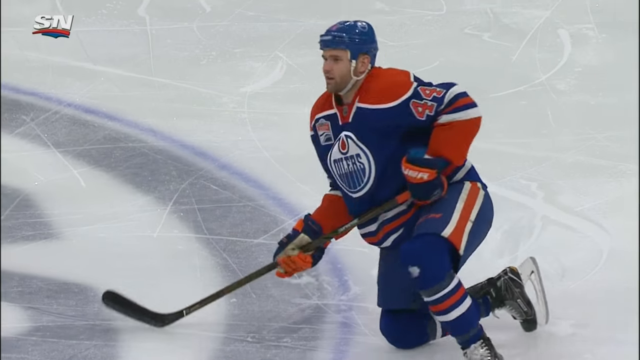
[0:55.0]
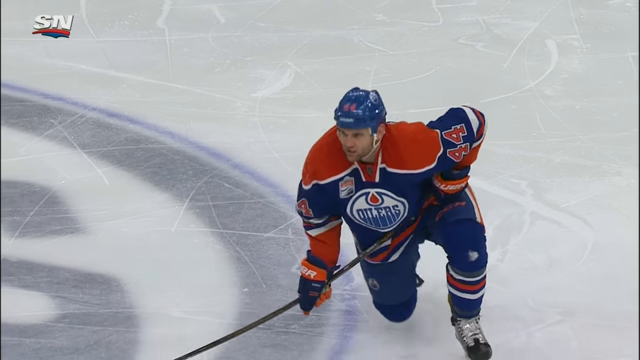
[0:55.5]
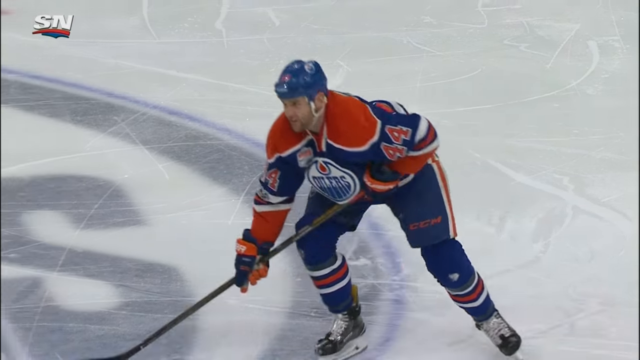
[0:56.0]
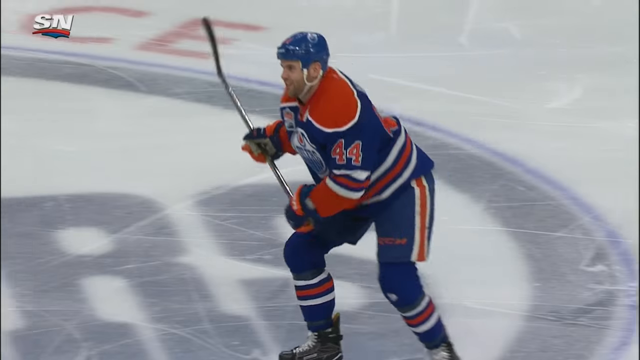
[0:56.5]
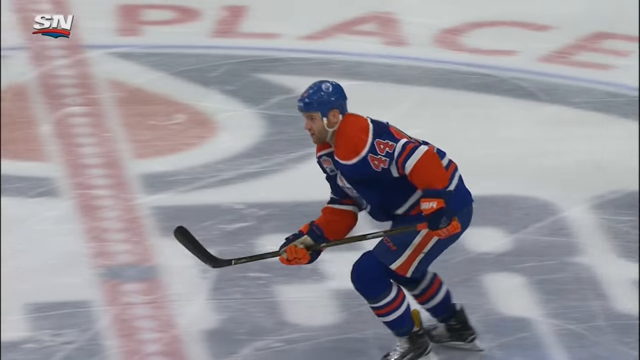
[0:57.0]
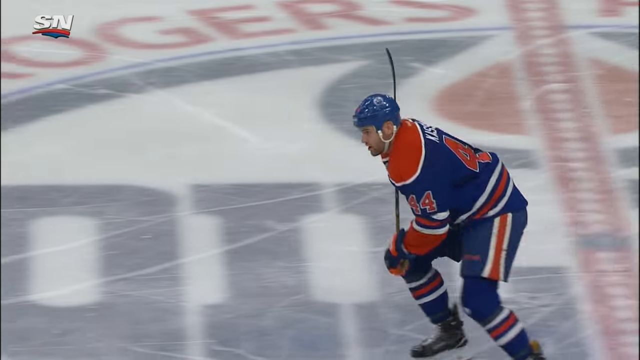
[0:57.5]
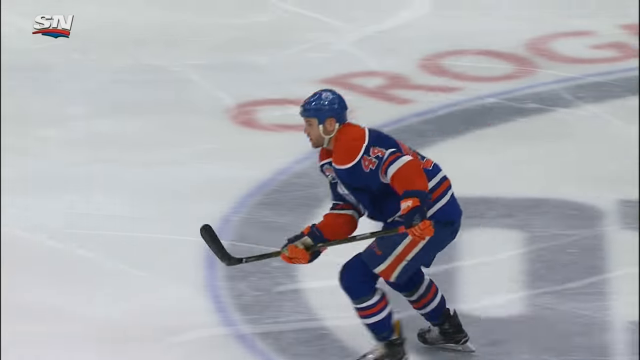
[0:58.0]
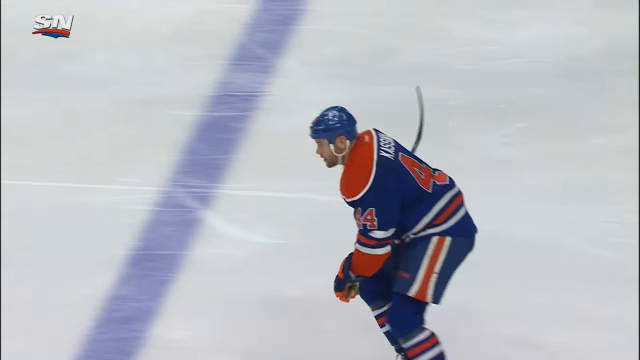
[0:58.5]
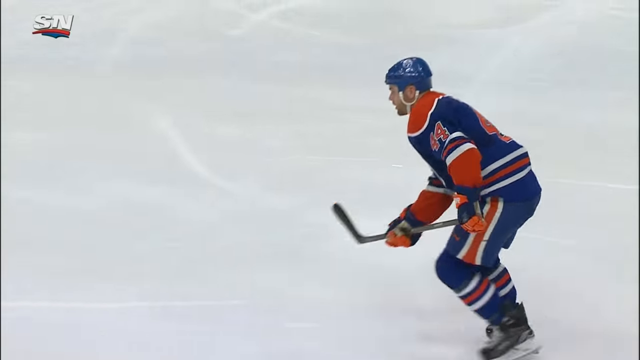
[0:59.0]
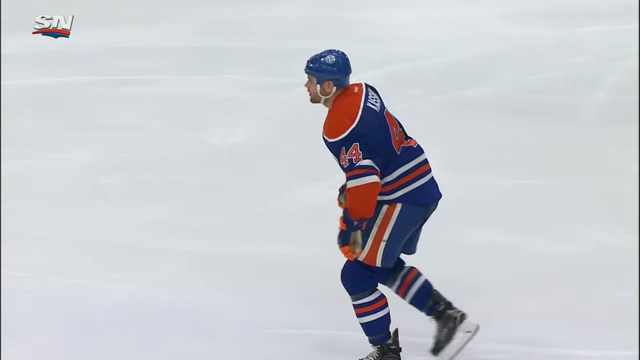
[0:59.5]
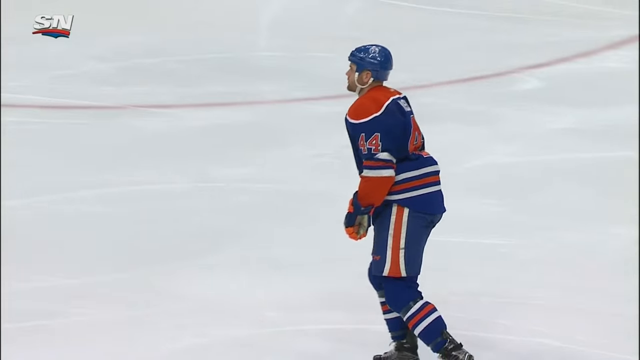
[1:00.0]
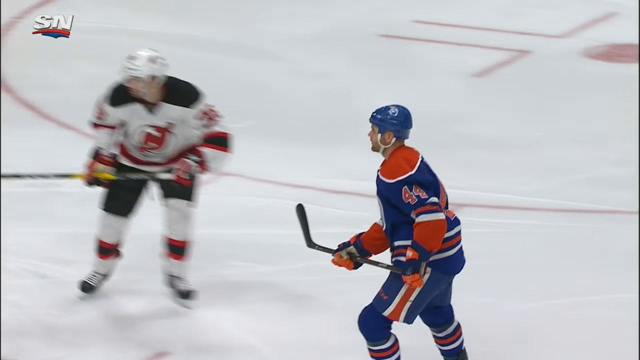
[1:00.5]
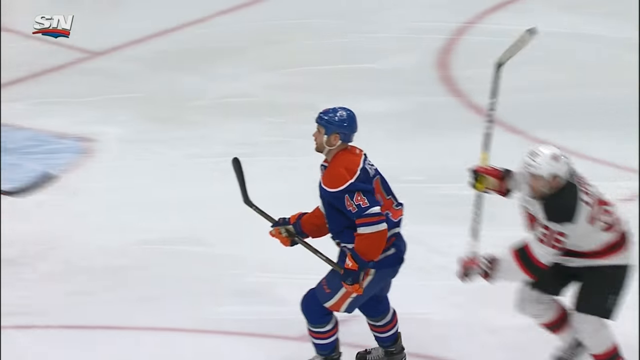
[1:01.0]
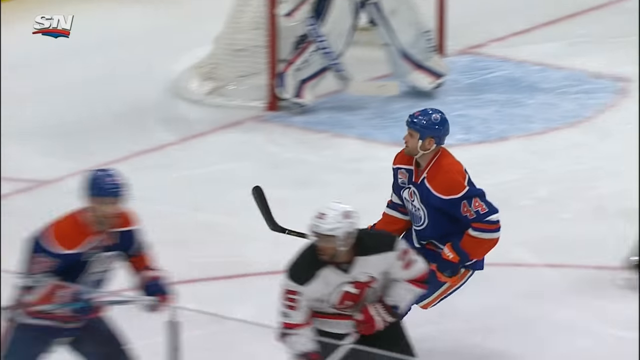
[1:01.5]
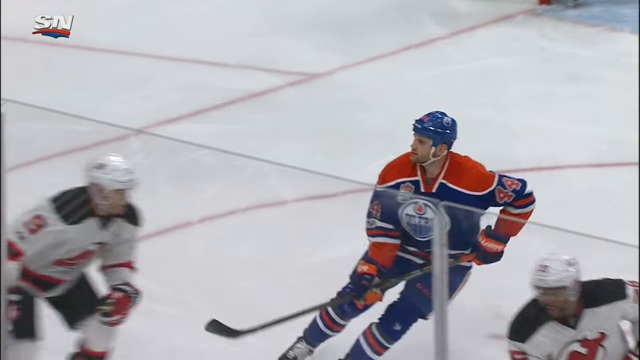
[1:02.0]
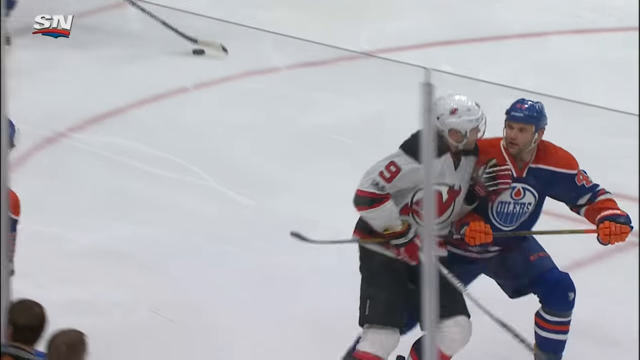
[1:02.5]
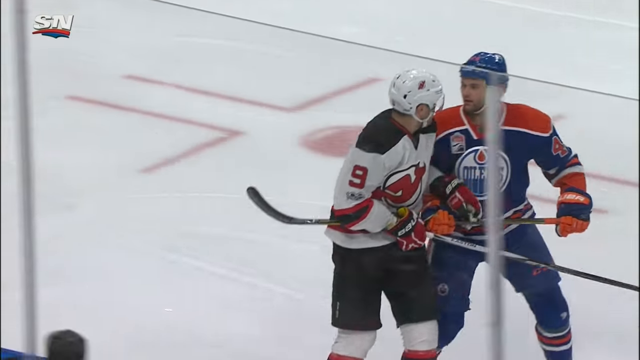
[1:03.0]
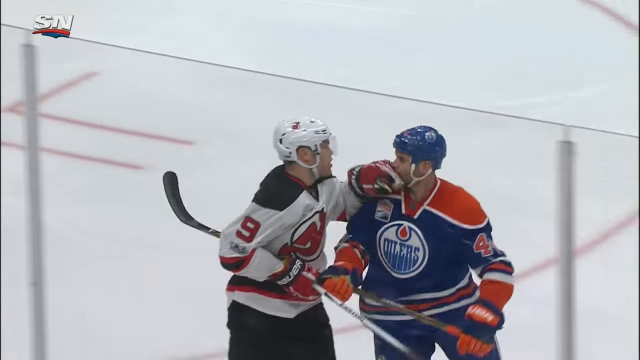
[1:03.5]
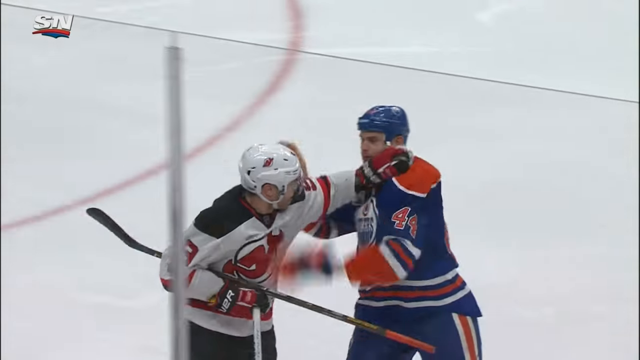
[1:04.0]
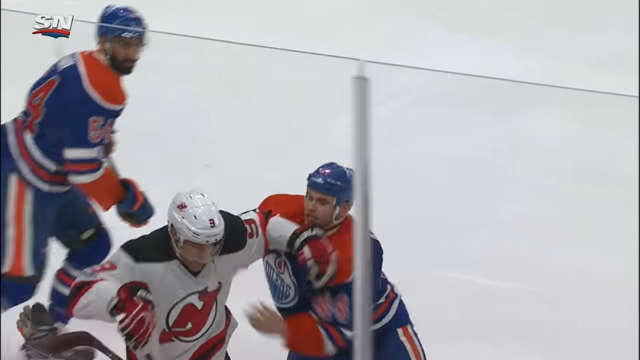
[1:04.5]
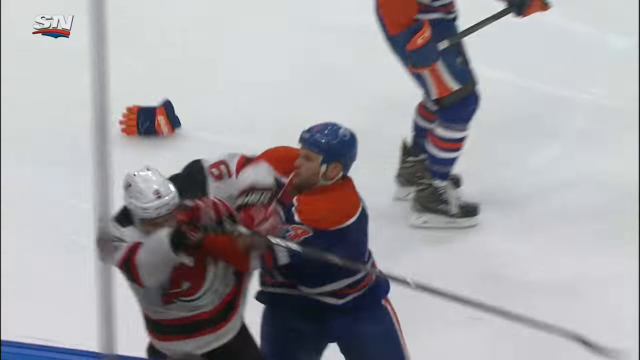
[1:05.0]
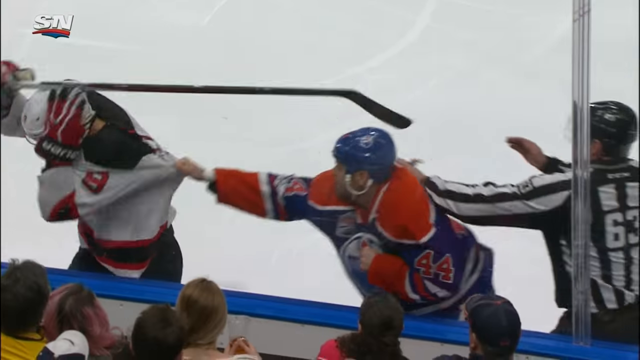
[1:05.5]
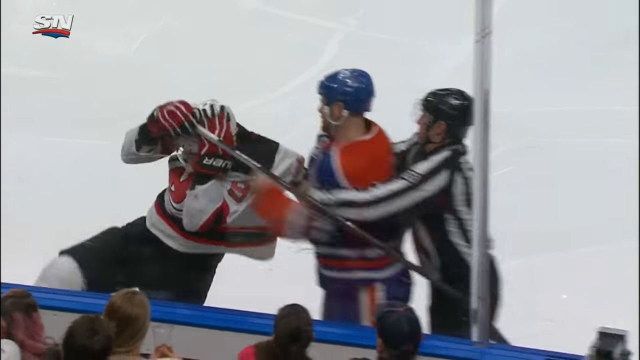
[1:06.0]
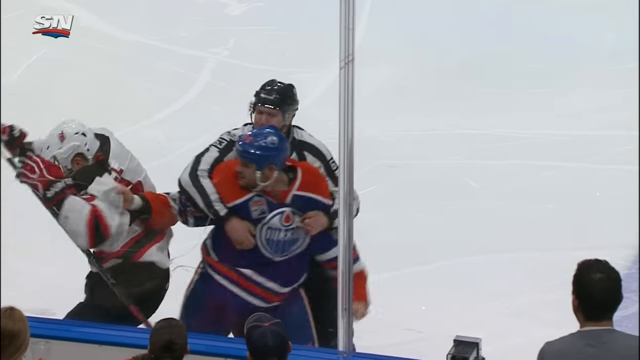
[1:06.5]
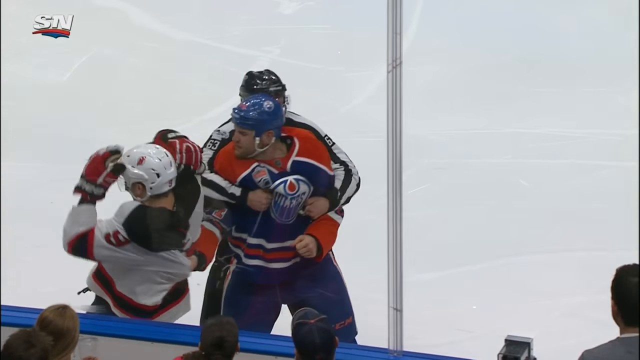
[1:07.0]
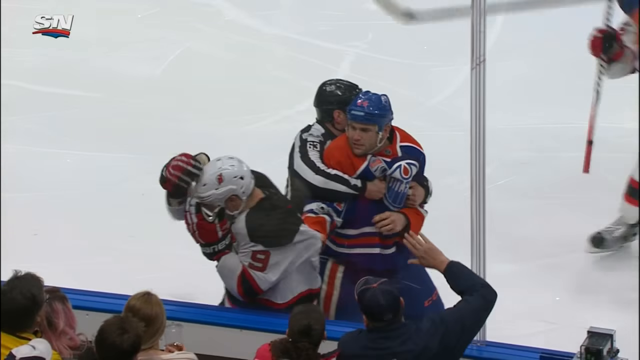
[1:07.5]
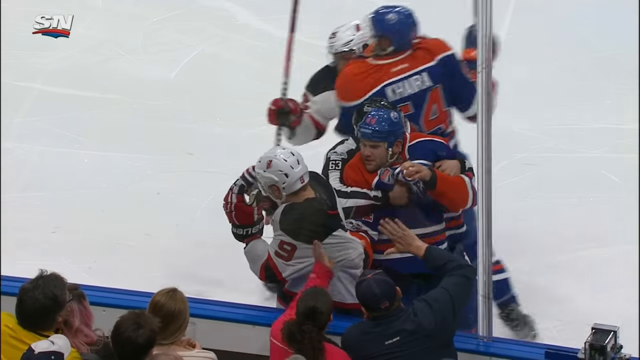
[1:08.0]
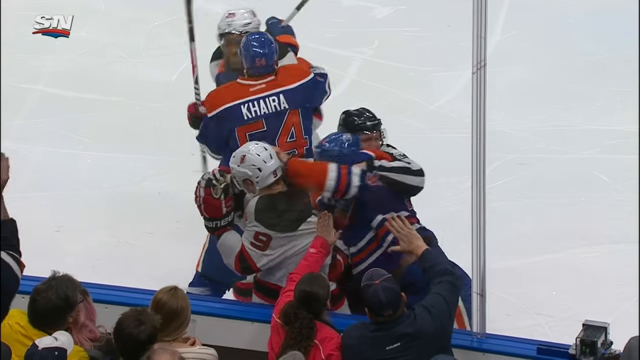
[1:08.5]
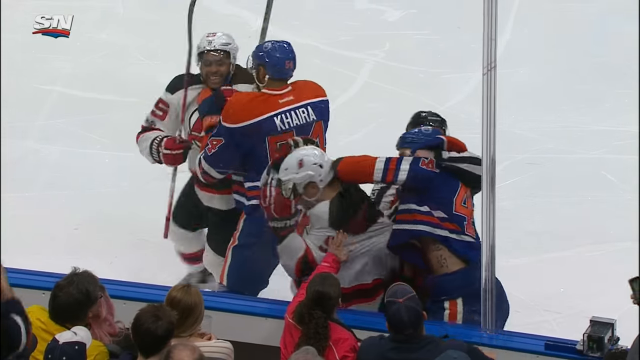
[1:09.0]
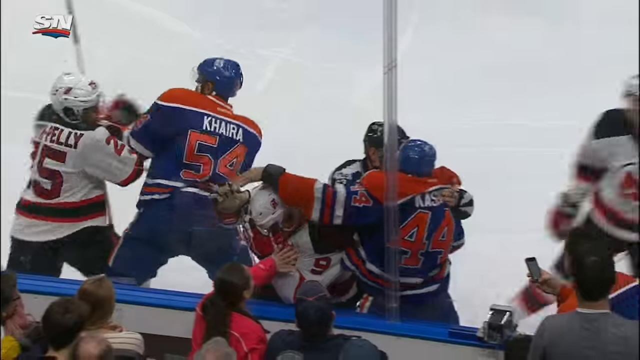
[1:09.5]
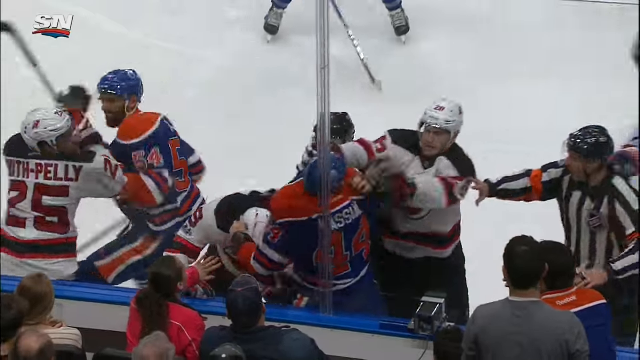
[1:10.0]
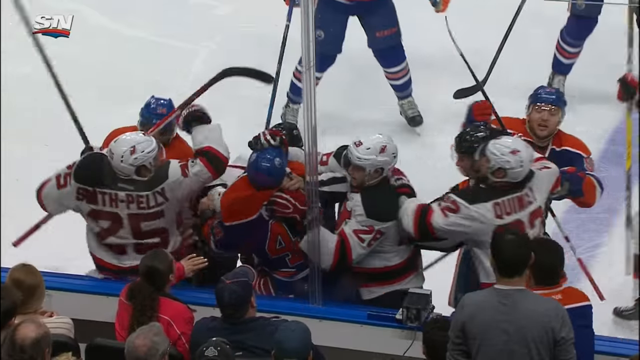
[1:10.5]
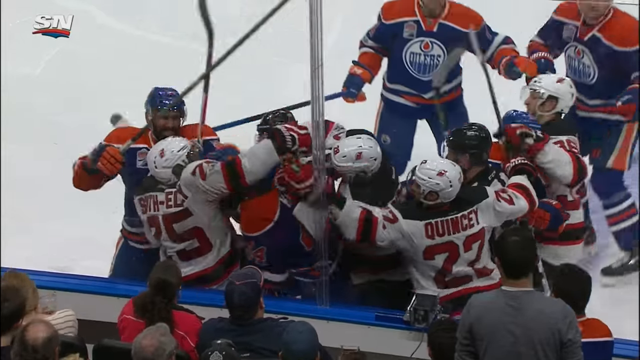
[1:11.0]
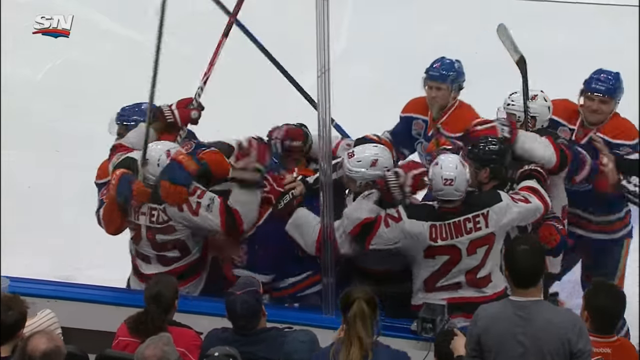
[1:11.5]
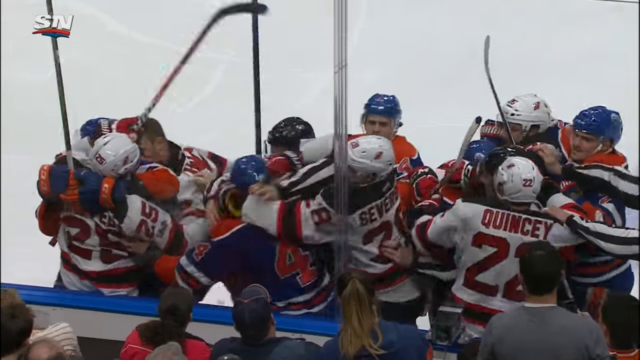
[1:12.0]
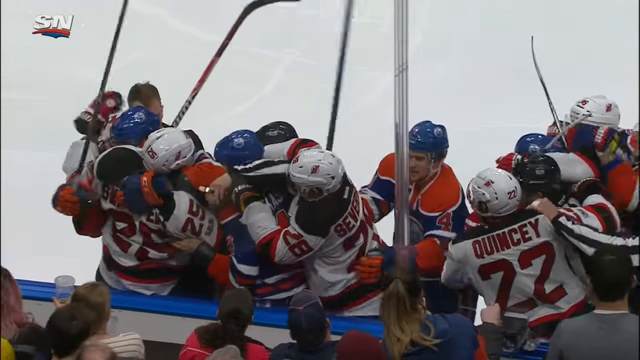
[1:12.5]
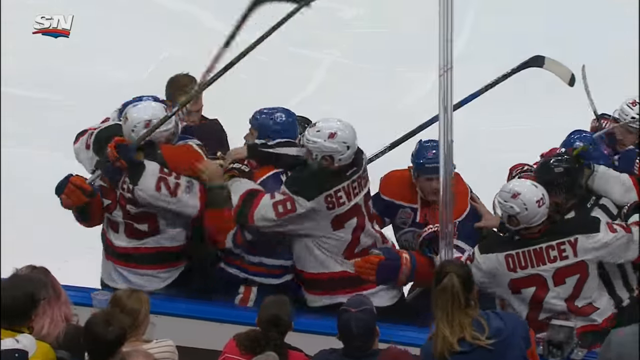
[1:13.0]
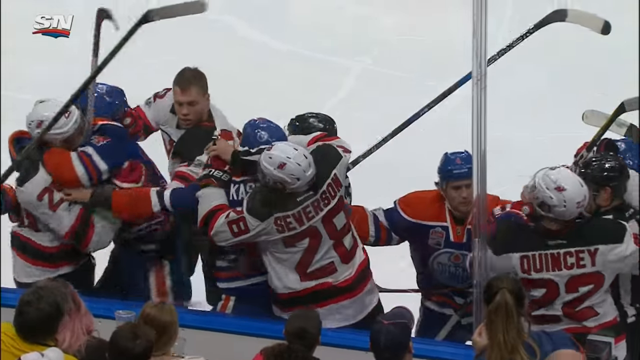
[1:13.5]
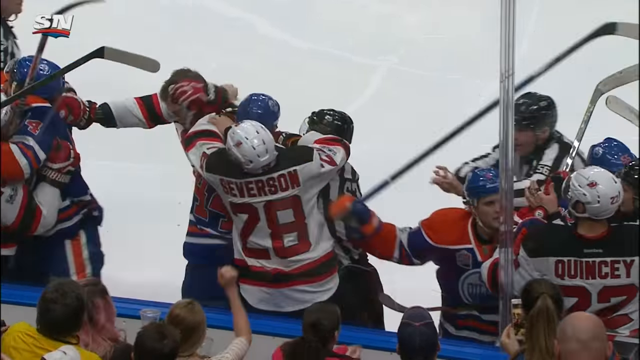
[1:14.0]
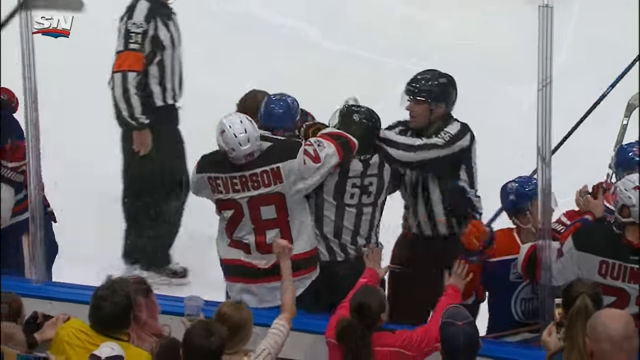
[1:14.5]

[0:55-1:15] Cassian throws punches to the face of New Jersey Devils number 9, who tries to put his hand up. The Devils wear red, black and white jerseys, and the Oilers wear orange and blue. A crowd watches, and the referees are present. One of the Devils has a mouth full of blood. The broadcast shows "SN", possibly a sports network.